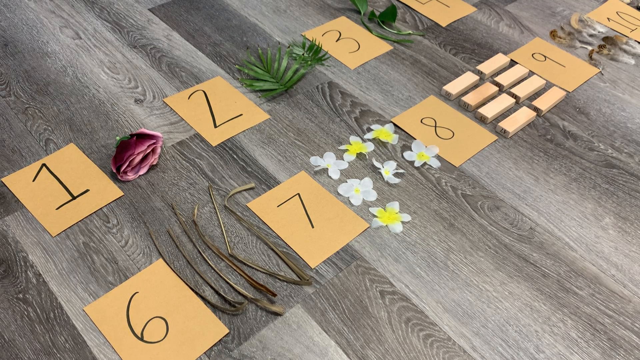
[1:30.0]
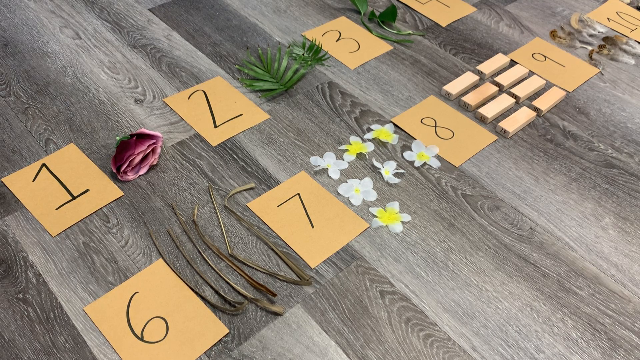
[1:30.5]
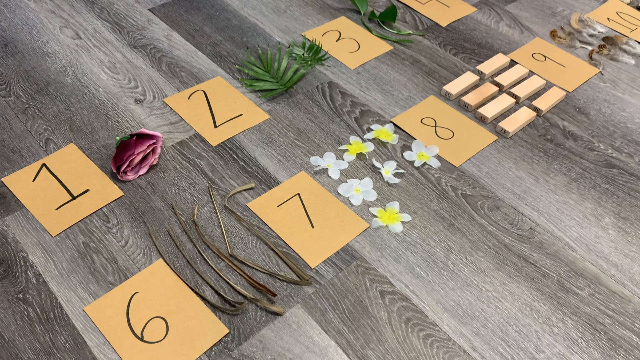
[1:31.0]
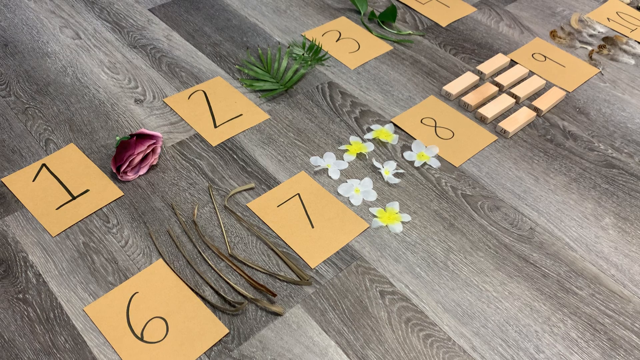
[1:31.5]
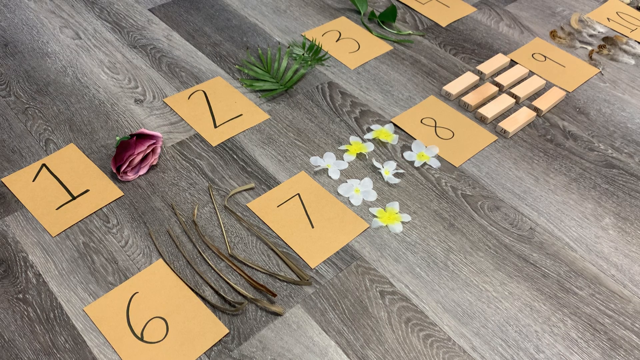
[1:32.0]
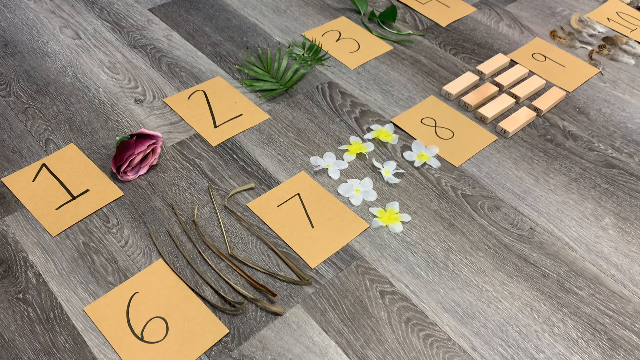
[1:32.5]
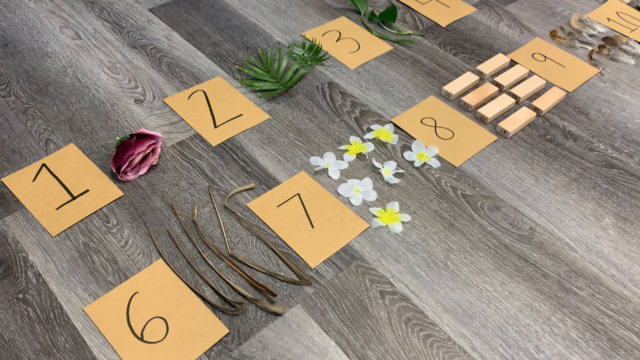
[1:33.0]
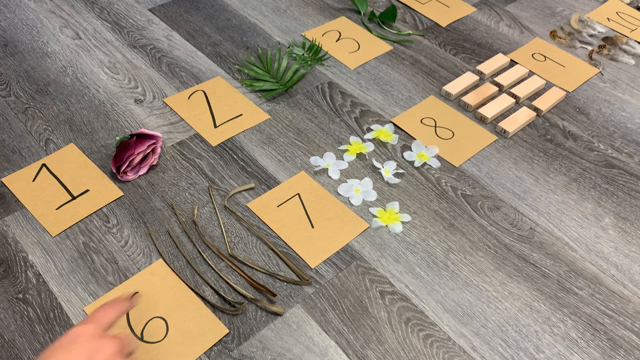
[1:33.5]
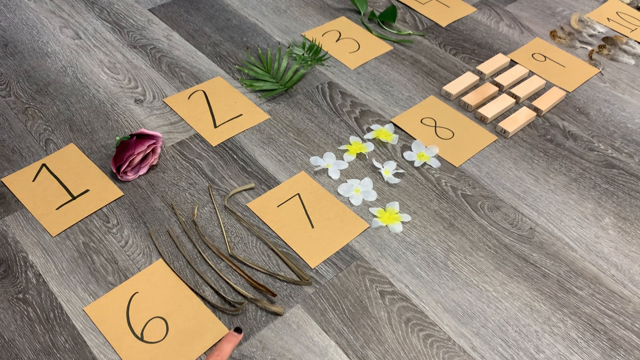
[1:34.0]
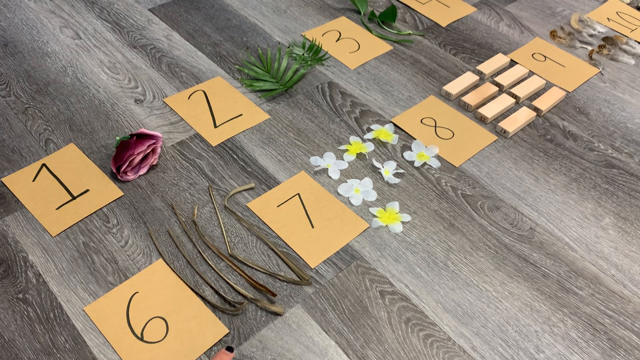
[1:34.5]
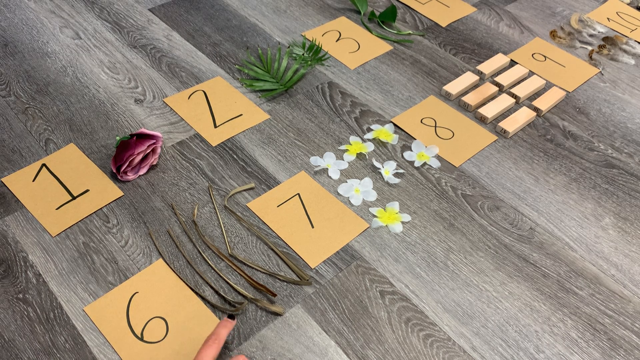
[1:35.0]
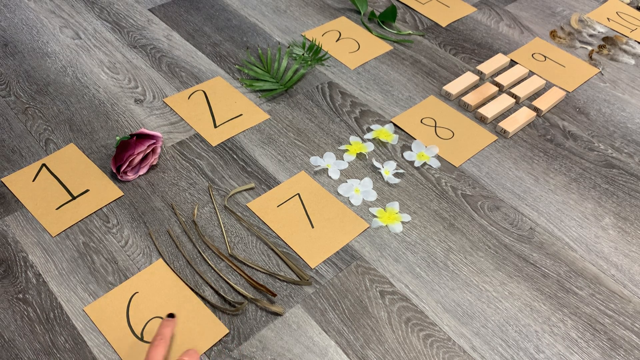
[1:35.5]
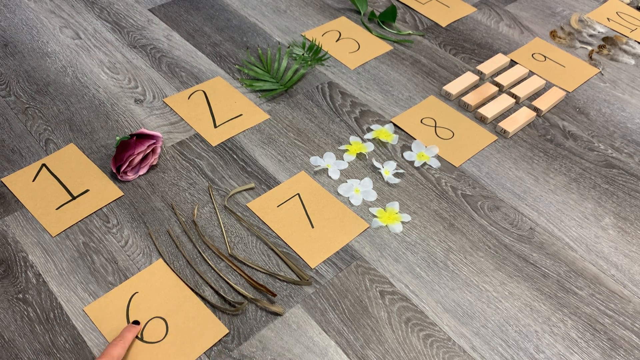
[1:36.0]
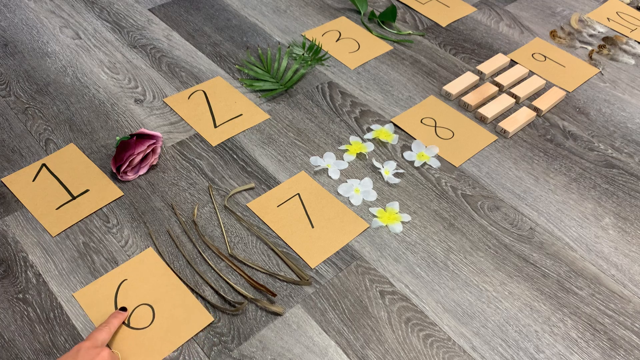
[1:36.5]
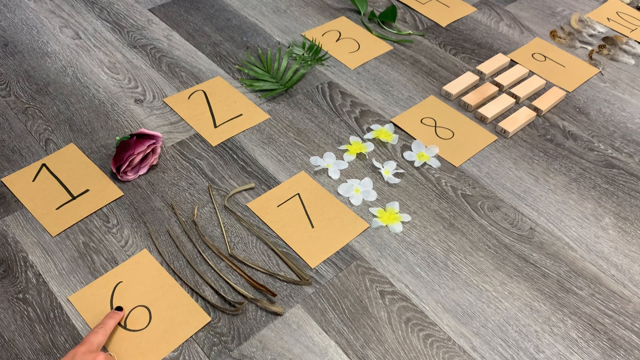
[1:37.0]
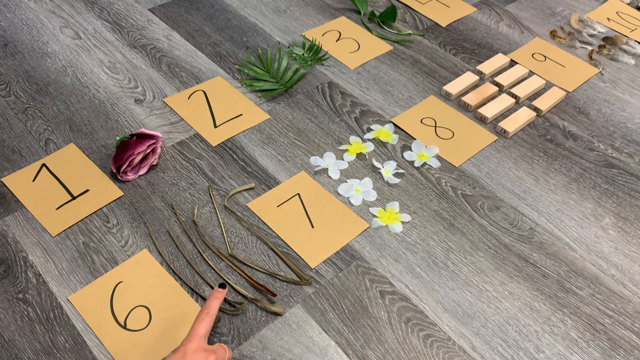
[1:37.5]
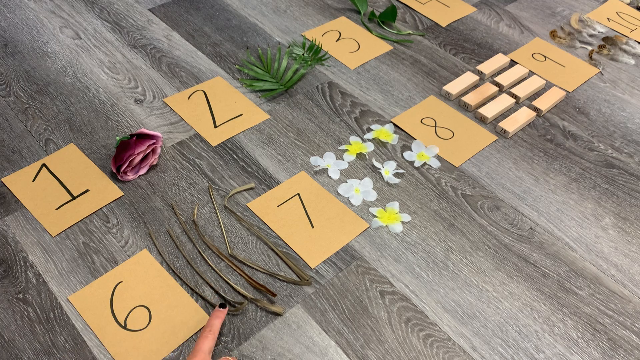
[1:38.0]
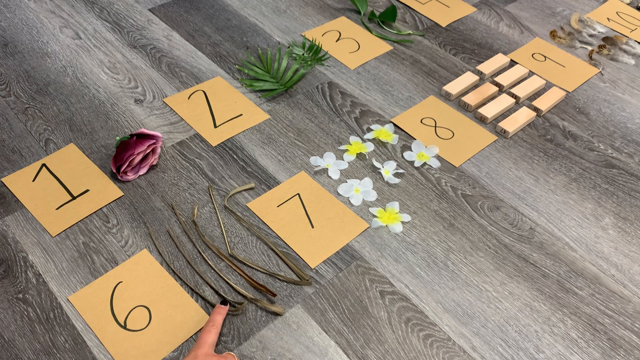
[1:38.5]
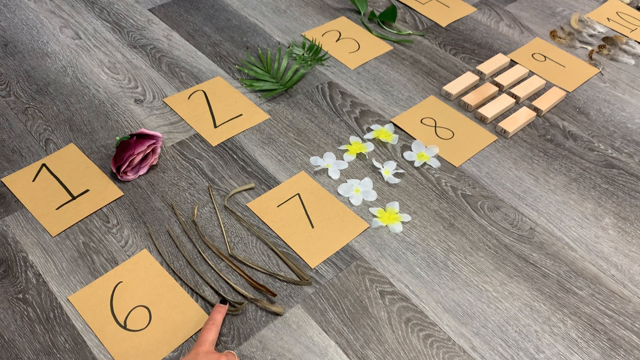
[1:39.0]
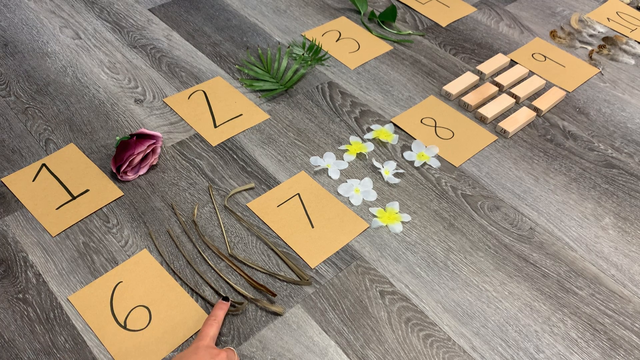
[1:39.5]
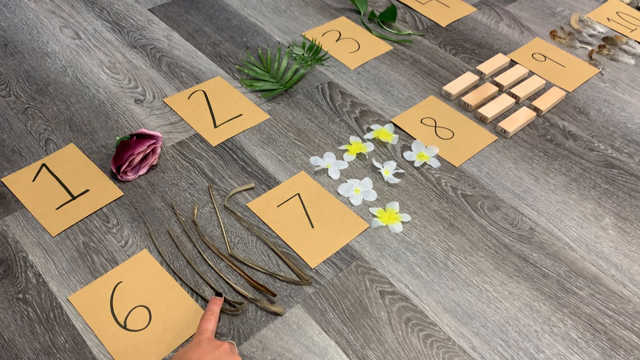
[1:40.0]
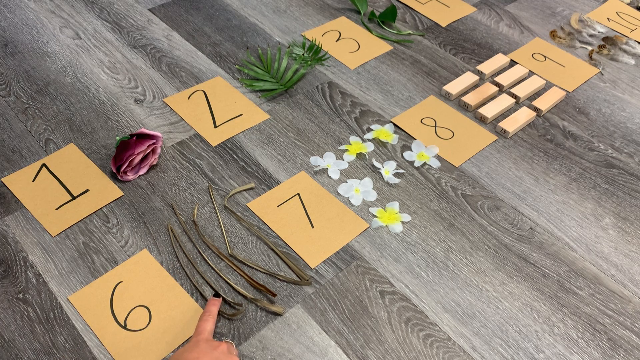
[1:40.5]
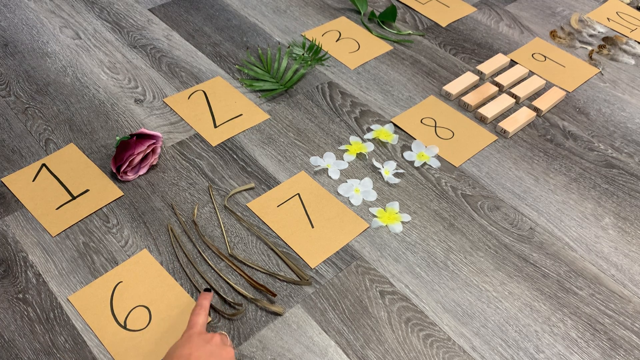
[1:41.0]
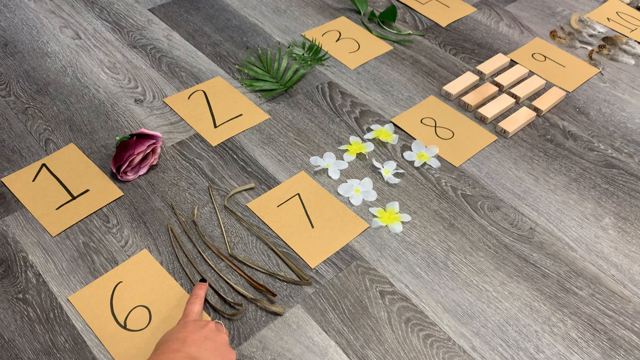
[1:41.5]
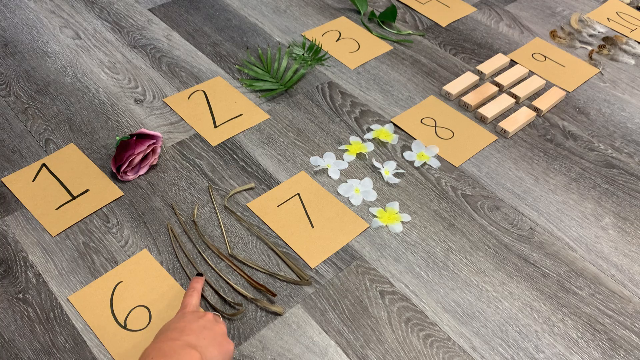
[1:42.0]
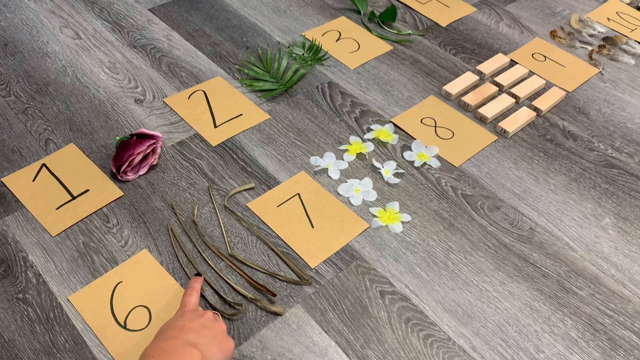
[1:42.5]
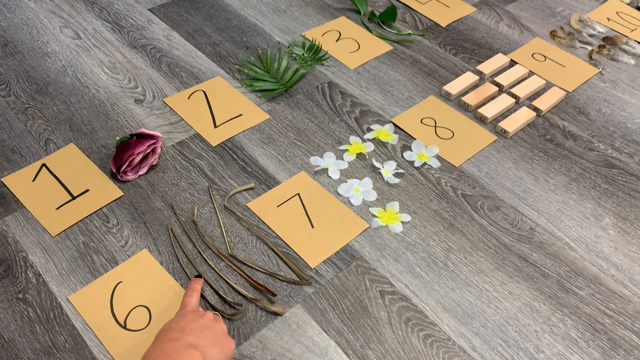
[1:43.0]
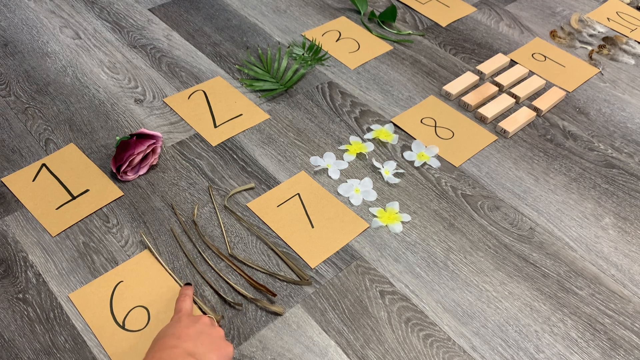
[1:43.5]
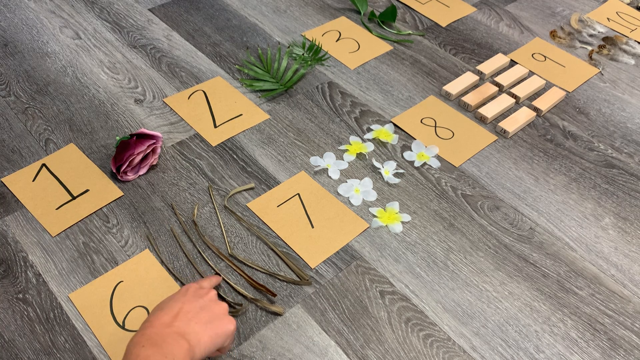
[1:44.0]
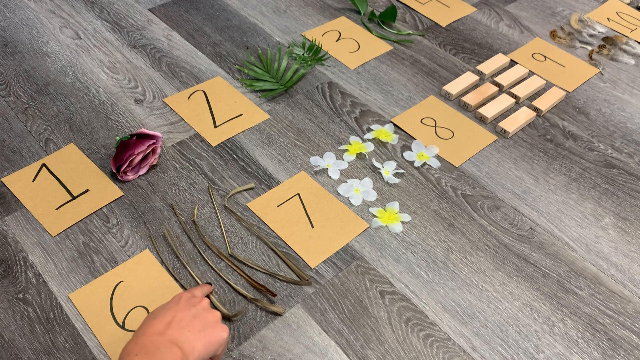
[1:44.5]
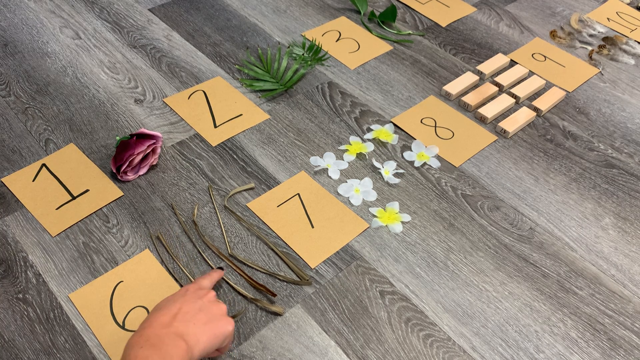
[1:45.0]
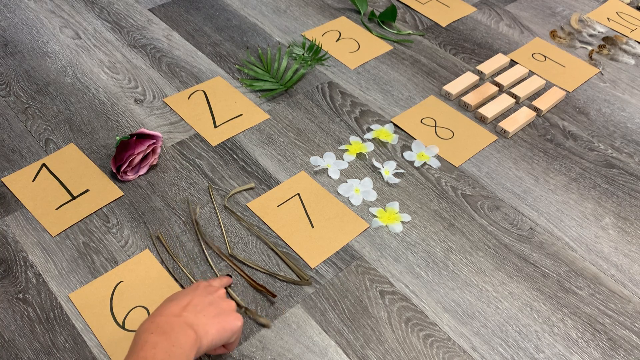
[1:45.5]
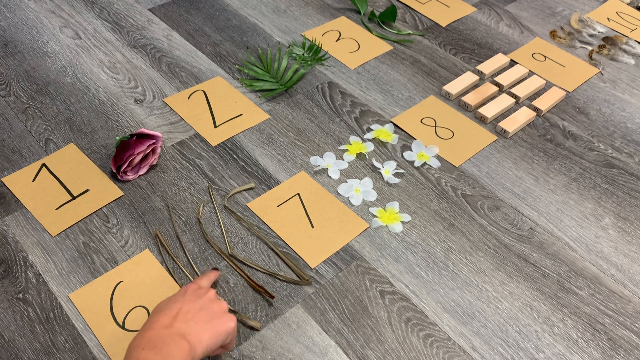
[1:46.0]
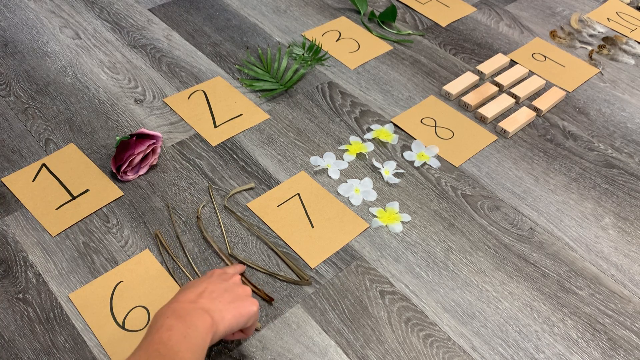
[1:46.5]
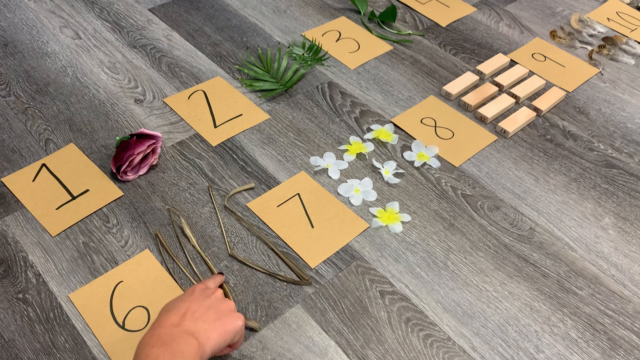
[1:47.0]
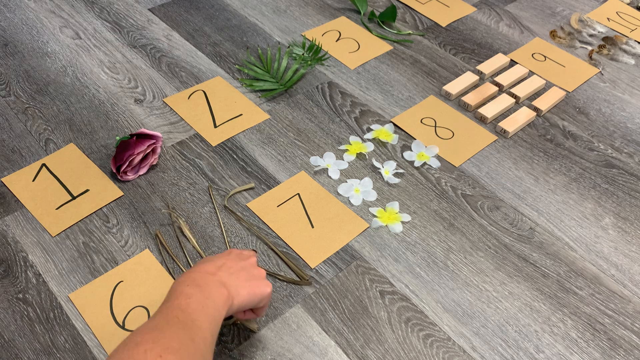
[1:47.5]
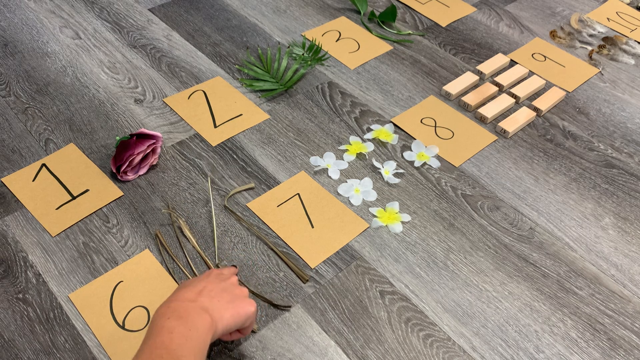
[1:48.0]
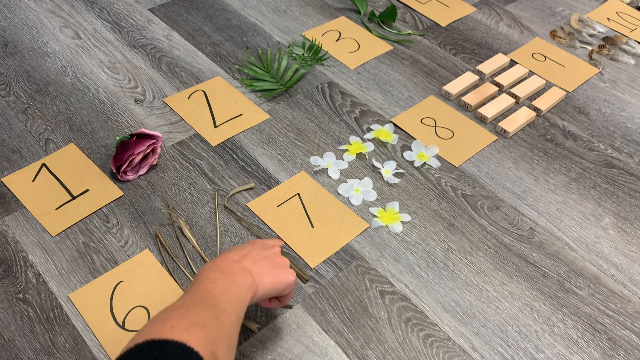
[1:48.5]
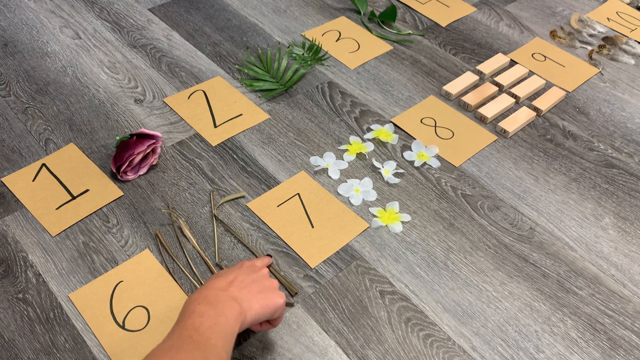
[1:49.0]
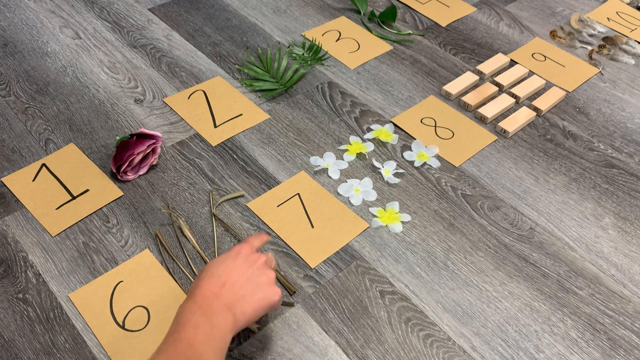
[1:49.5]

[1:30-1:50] A hand hovers over card 6, and the index finger touches the card and moves it slightly left. The finger then touches each of the sticks next to card 6 in turn, apparently counting them, and as it touches them it pushes the sticks towards the card. The hand touches only the items next to card 6; the other items remain in place. The camera stays still and the lighting remains the same.